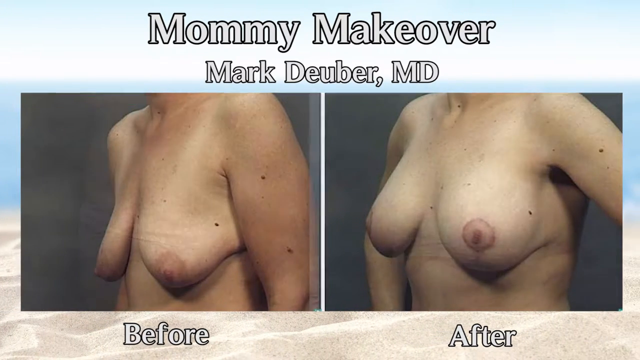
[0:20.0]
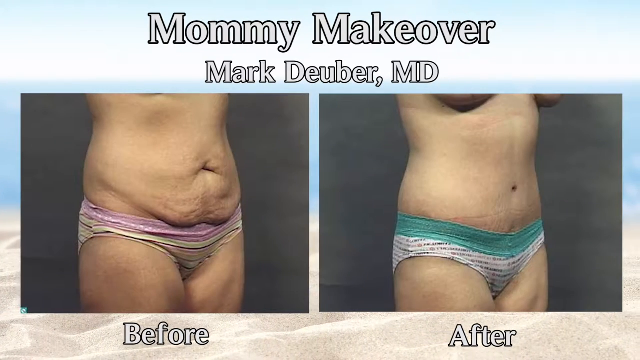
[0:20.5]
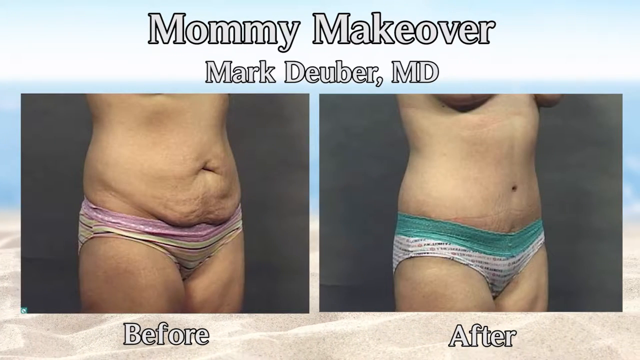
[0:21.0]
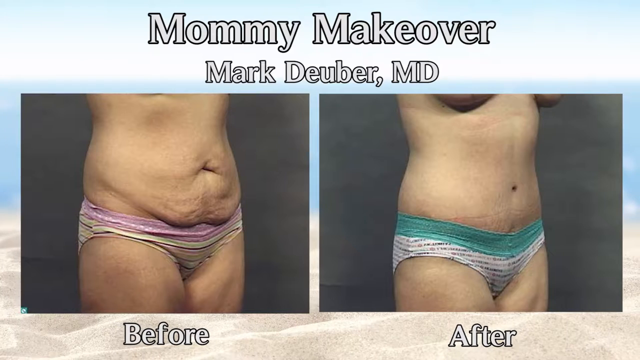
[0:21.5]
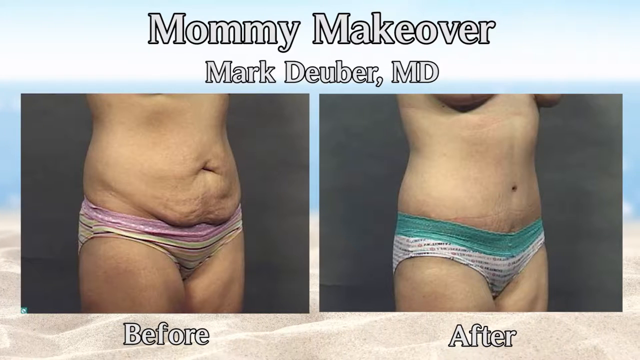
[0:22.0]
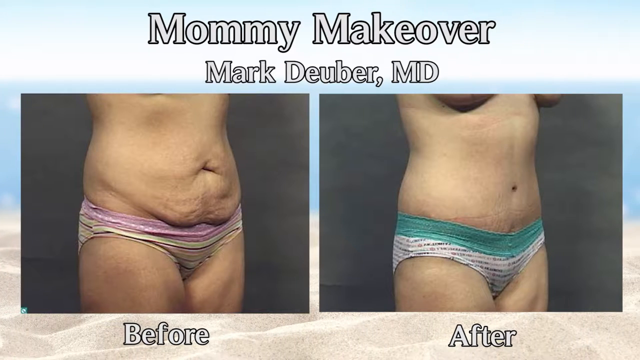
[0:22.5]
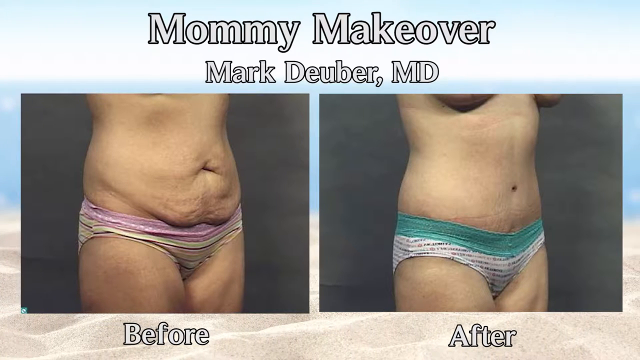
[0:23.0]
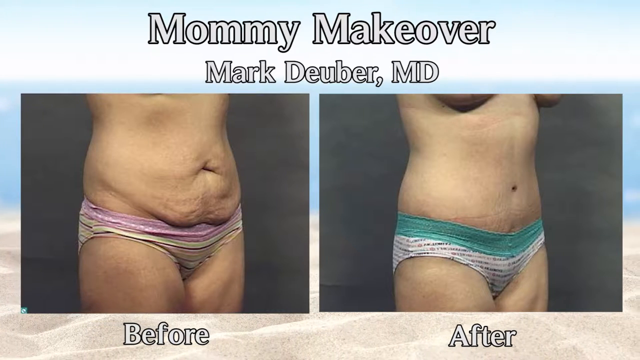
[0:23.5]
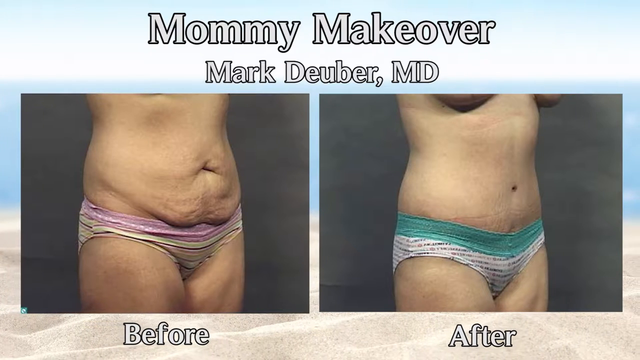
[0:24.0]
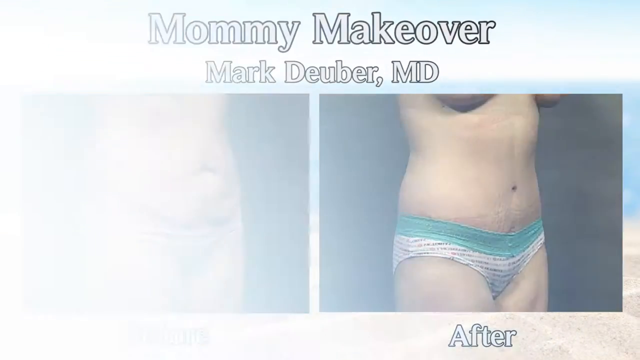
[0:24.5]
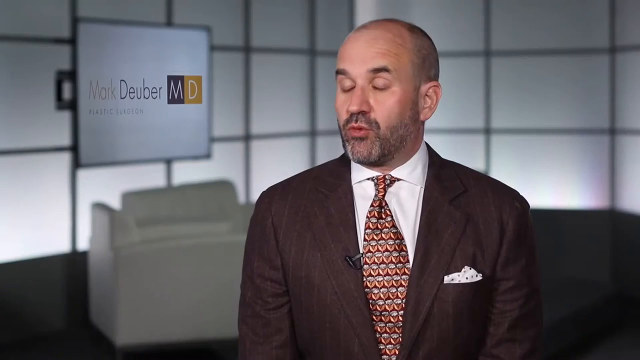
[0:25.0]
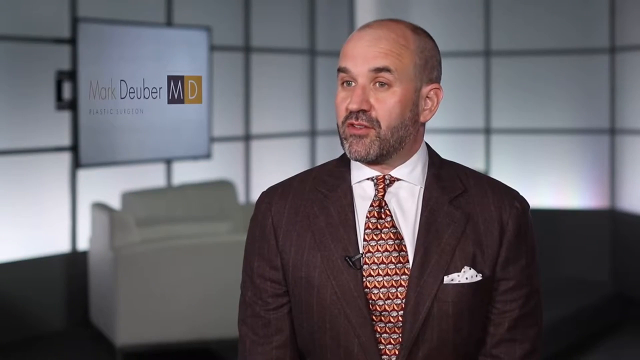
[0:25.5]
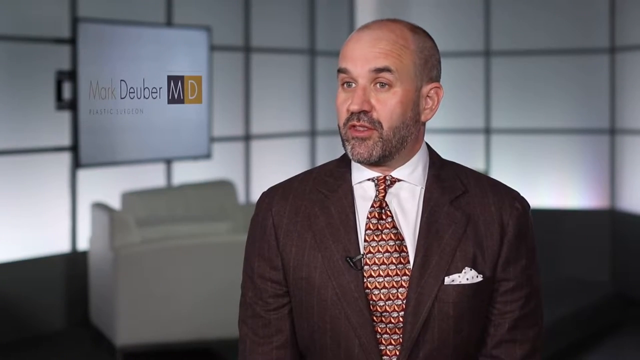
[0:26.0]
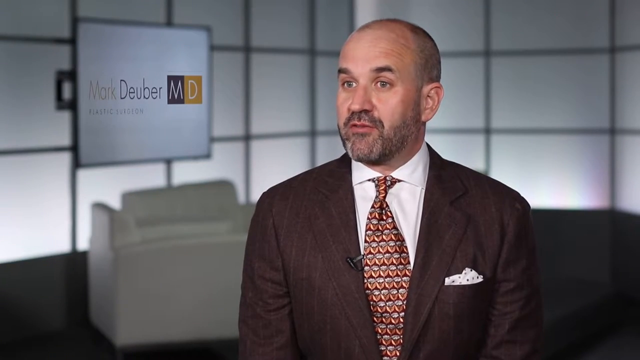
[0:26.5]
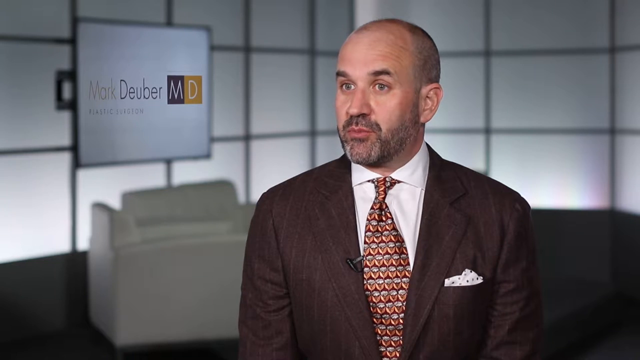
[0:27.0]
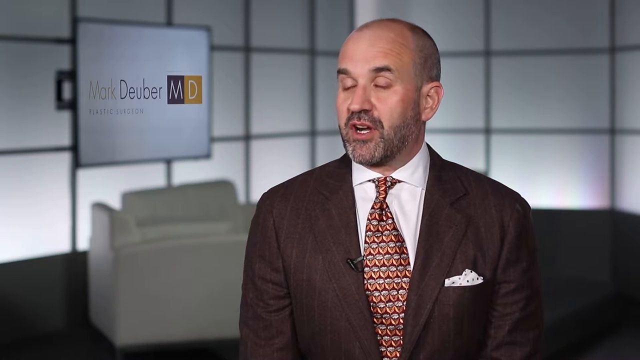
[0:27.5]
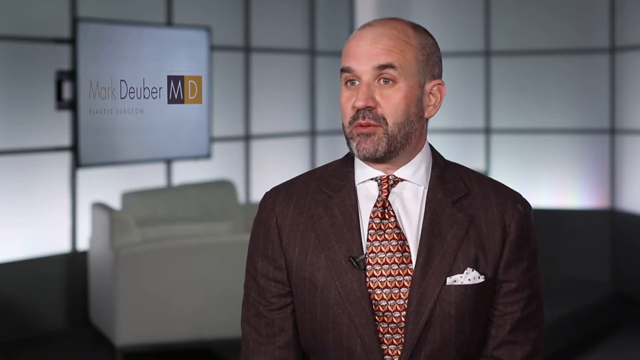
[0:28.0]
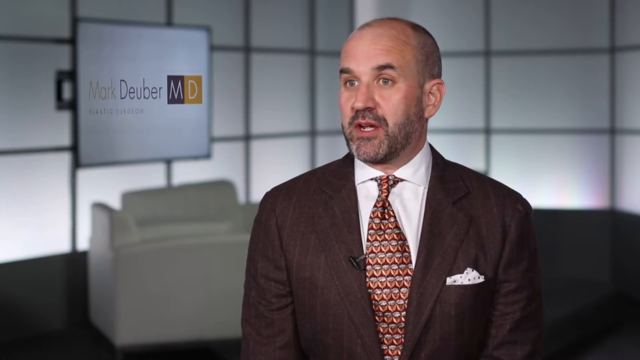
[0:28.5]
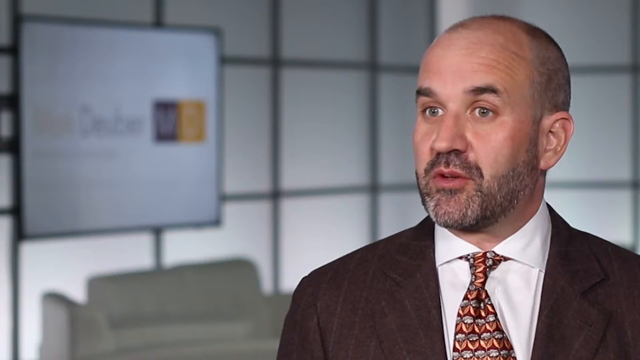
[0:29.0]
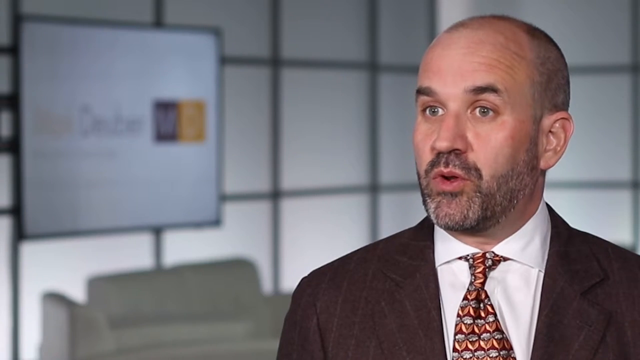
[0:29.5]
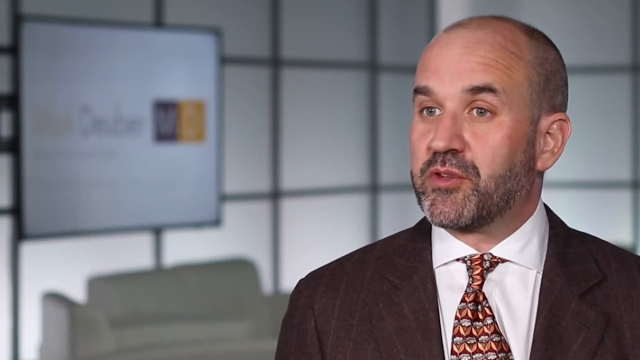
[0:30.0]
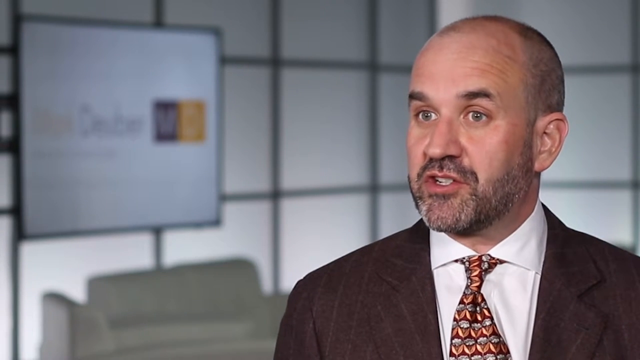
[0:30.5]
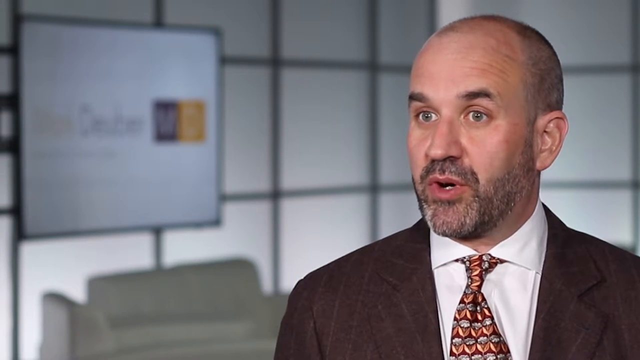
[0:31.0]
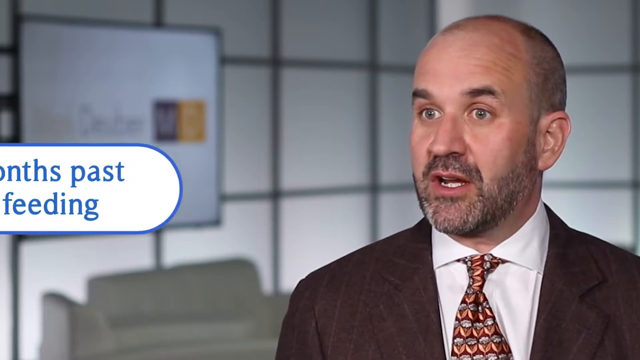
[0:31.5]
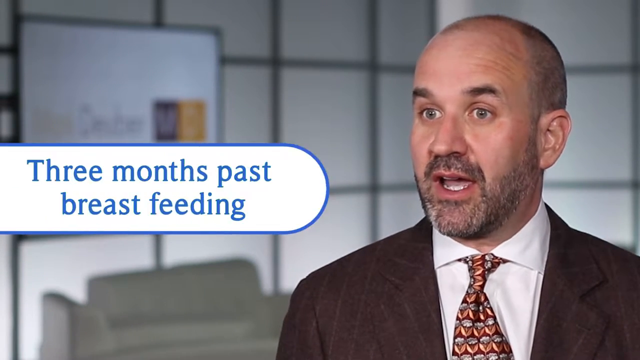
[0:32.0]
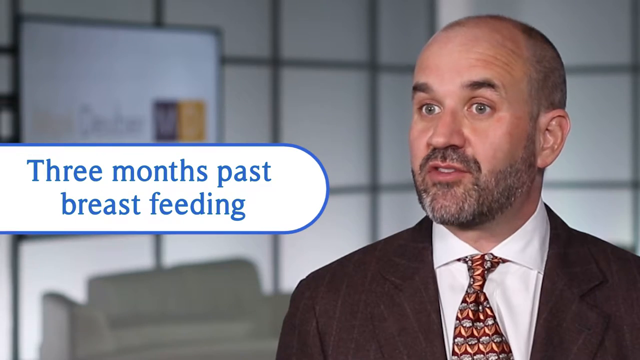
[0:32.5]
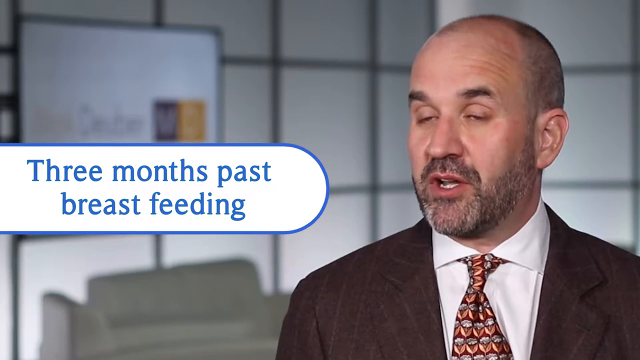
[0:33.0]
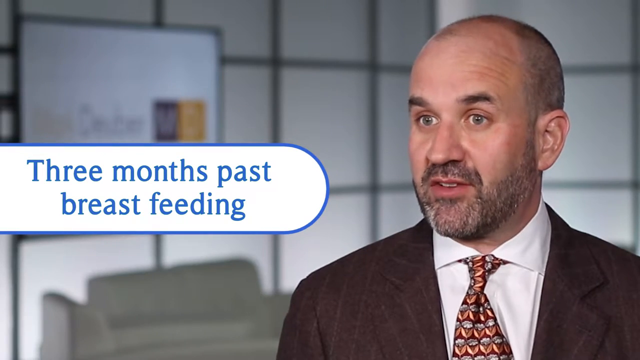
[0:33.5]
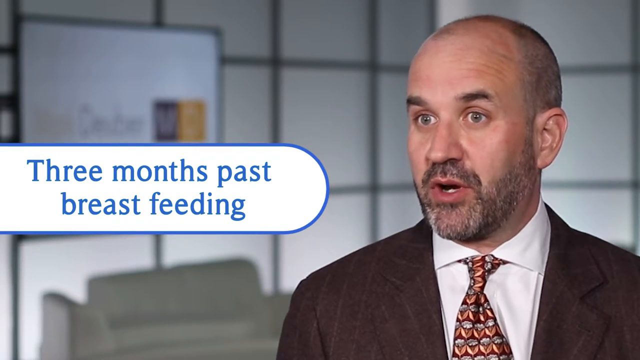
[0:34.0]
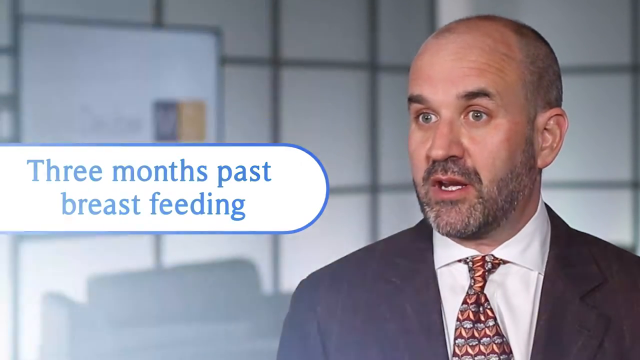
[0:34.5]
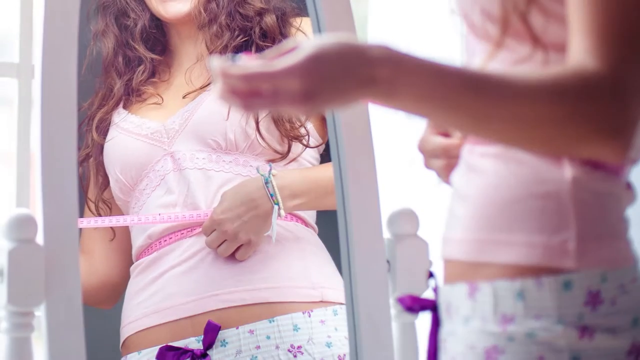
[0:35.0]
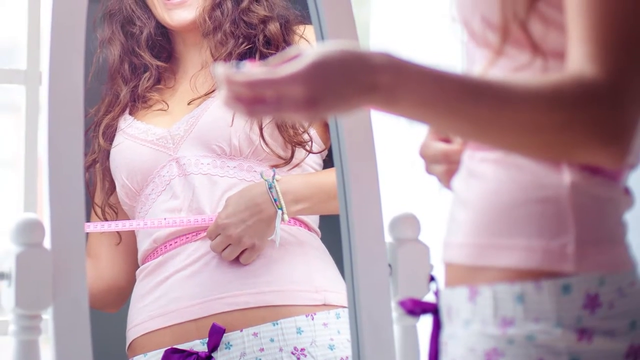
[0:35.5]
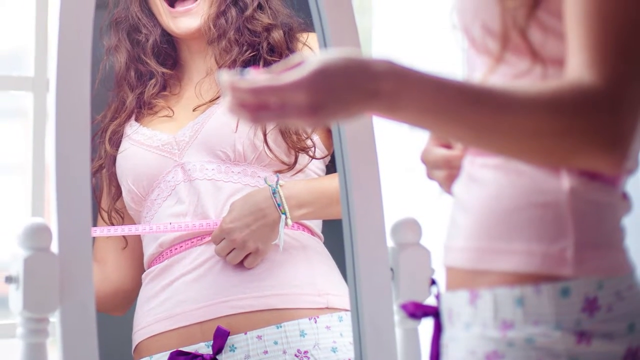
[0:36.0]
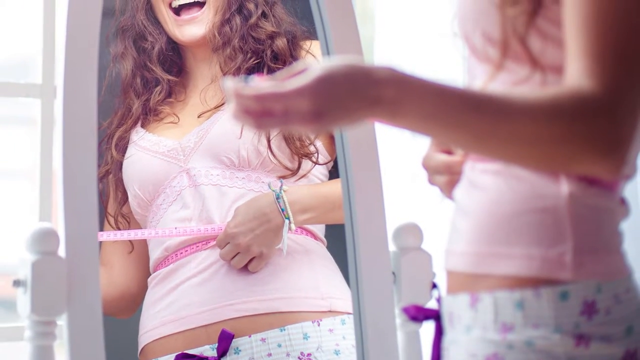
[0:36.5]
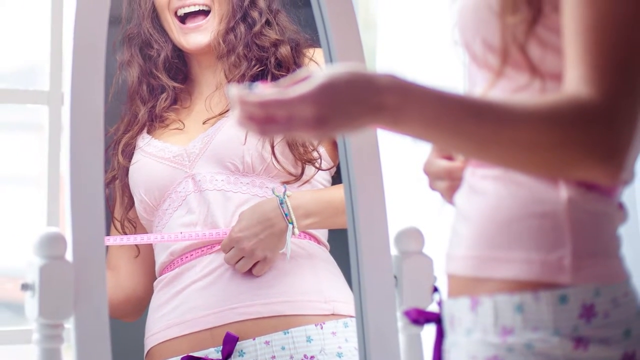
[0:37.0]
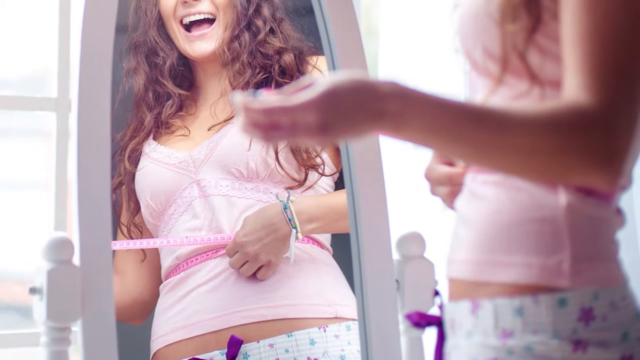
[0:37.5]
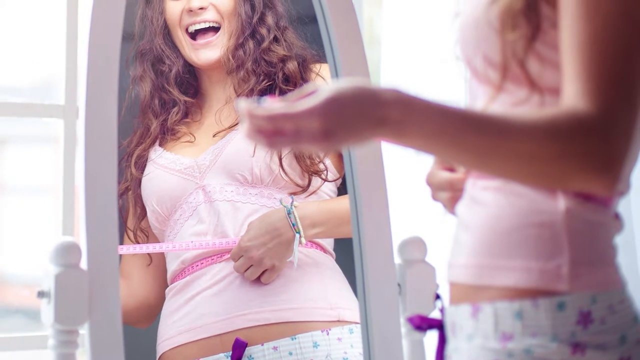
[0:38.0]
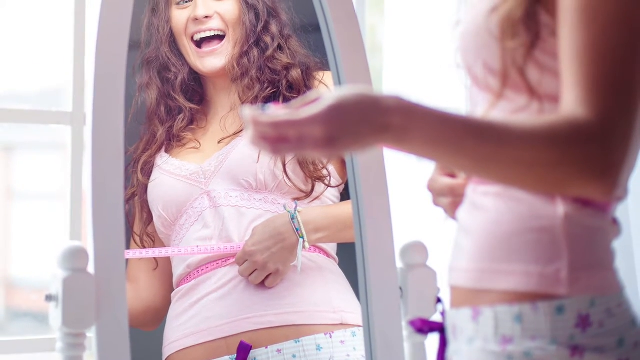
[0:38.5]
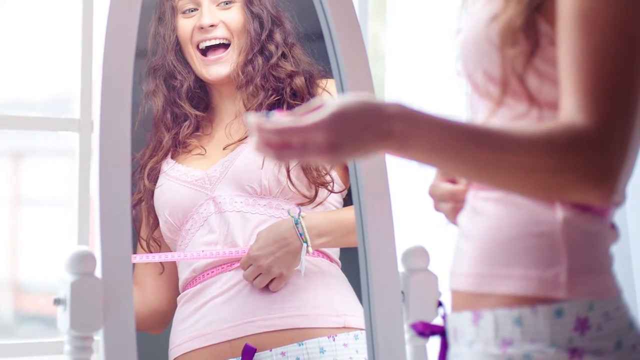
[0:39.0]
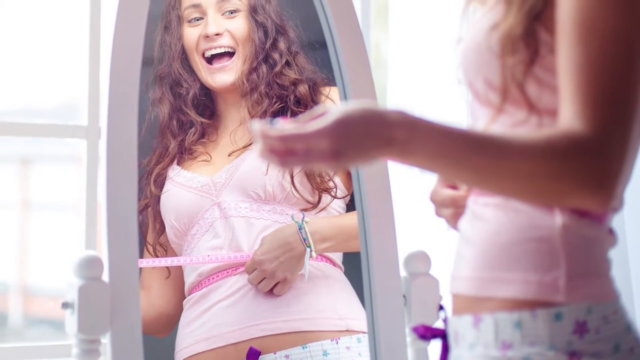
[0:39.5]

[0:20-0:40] At the top, outlined letters read "mommy makeover," and a second line reads "Mark Duber, MD." Below are two images of what is apparently a woman after having cosmetic surgery. In the first image she wears only underwear and her stomach looks very floppy, fatty and loose. In the second image it appears she may have had a tummy tuck; she wears different underwear, no scar is really visible, but her stomach looks flatter and the excess skin looks like it has been removed. The video changes to the doctor speaking, seen from the lower chest up. He wears what appears to be a brown suit jacket, a busy tie and a white collared shirt. He is balding with very buzzed hair and has a very short beard and mustache. Behind him are the words "Mark Duber, MD" on a screen or a sign. He speaks very calmly, and text comes in from the left reading "three months past breastfeeding." The image then switches to a woman standing in front of a mirror, measuring her waist with a fabric measuring tape and smiling, showing she is happy with the measurement.